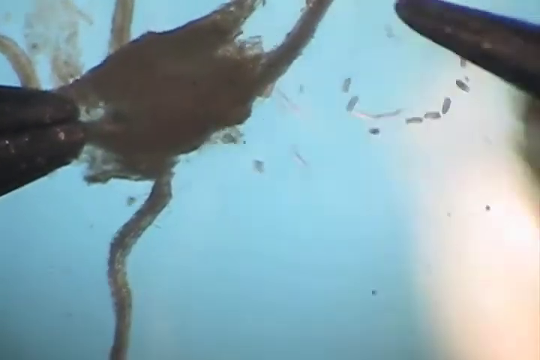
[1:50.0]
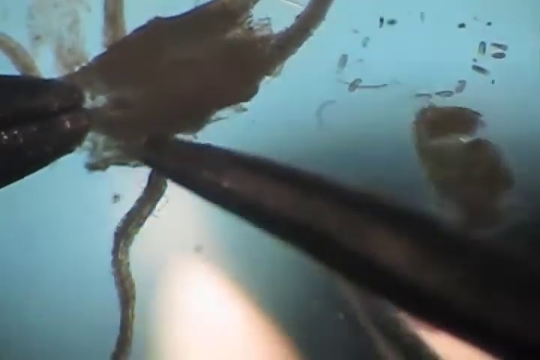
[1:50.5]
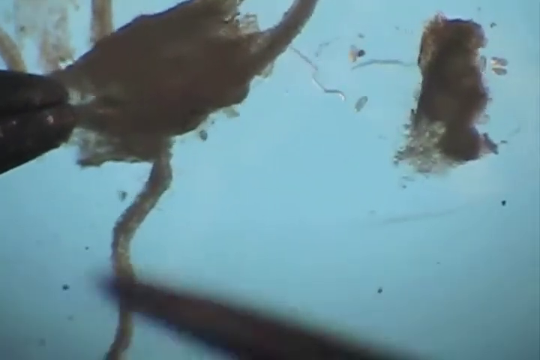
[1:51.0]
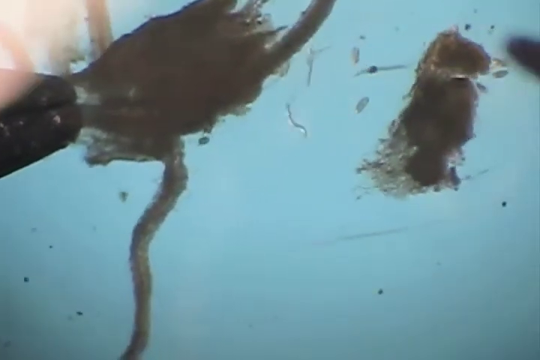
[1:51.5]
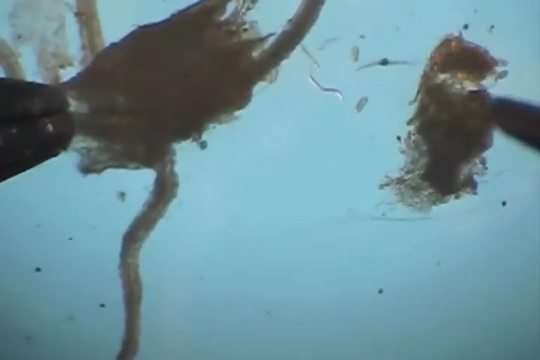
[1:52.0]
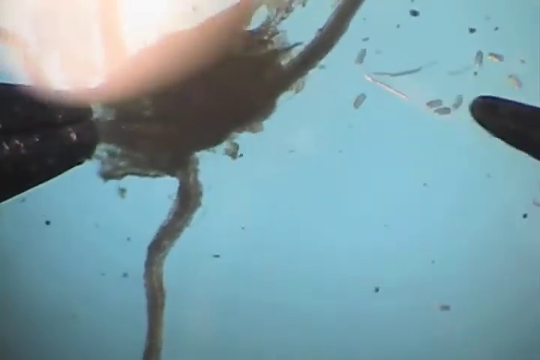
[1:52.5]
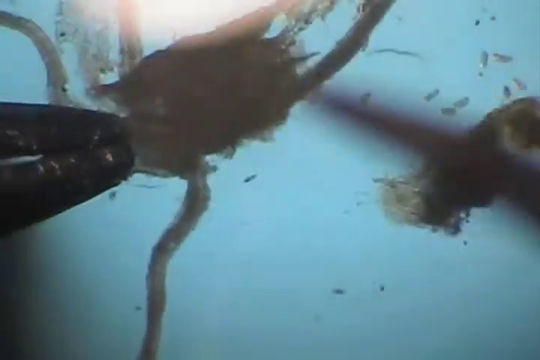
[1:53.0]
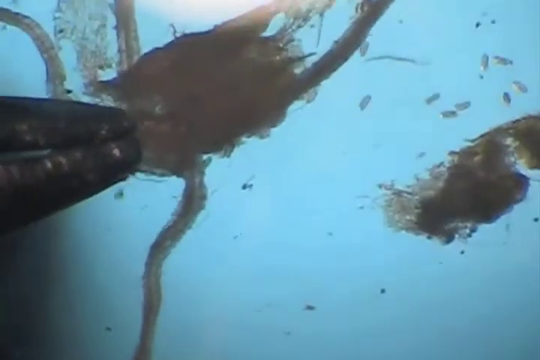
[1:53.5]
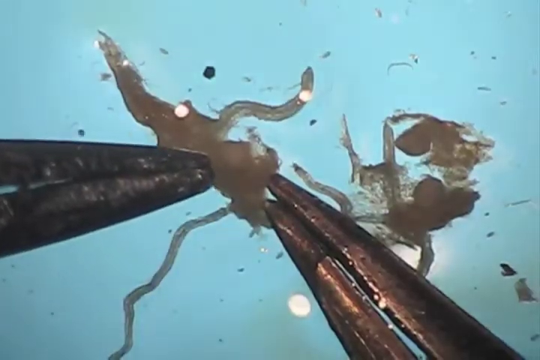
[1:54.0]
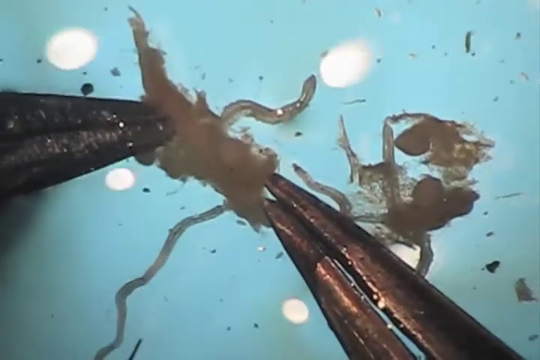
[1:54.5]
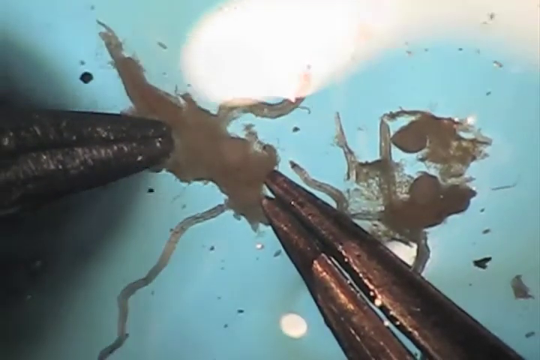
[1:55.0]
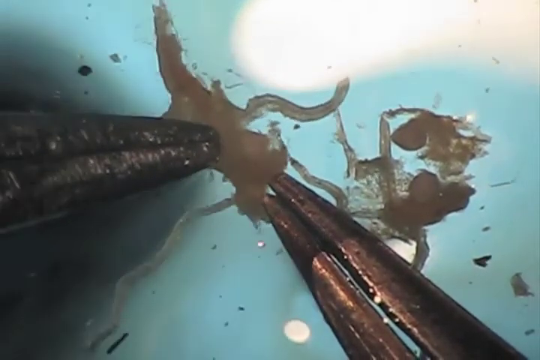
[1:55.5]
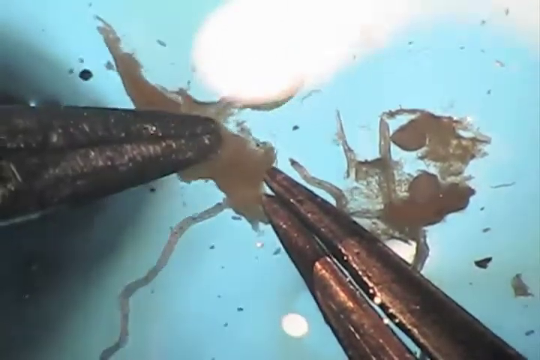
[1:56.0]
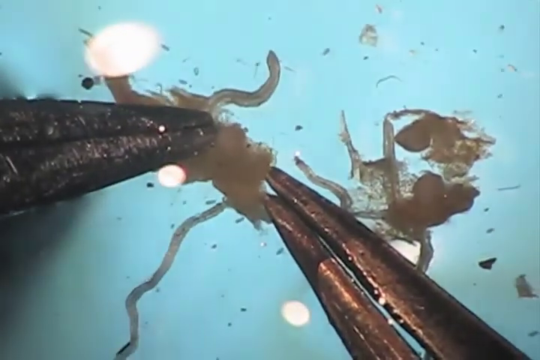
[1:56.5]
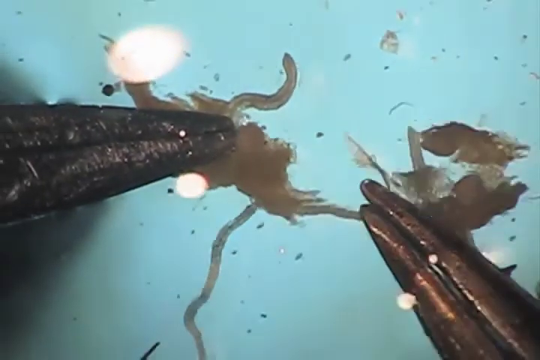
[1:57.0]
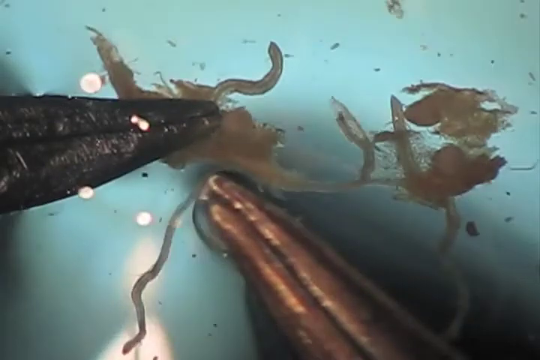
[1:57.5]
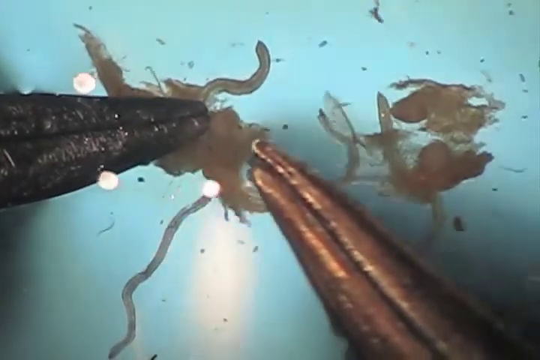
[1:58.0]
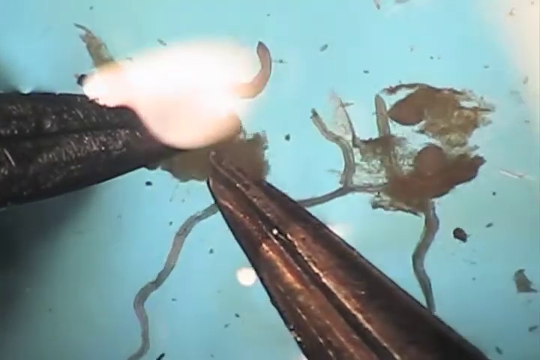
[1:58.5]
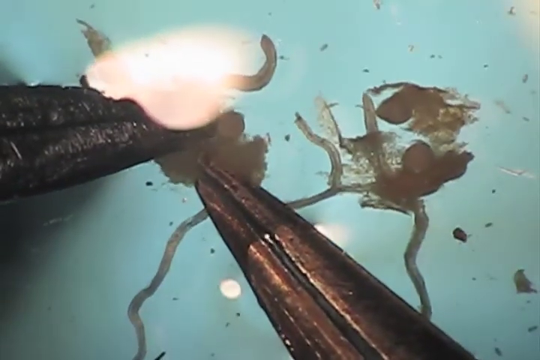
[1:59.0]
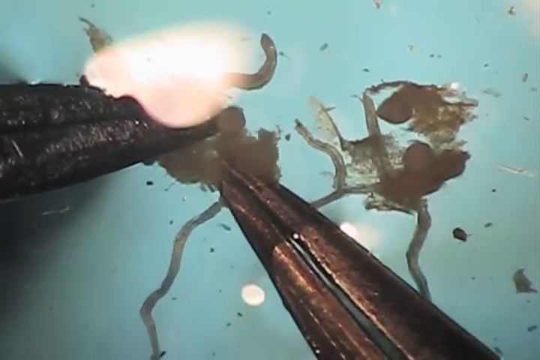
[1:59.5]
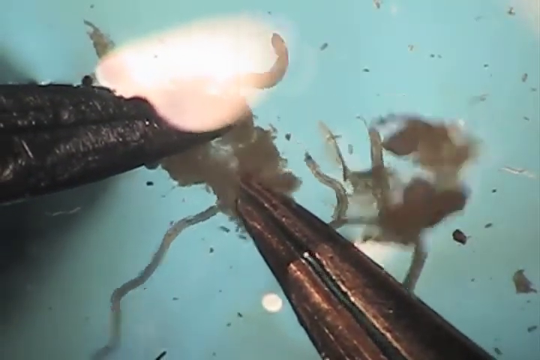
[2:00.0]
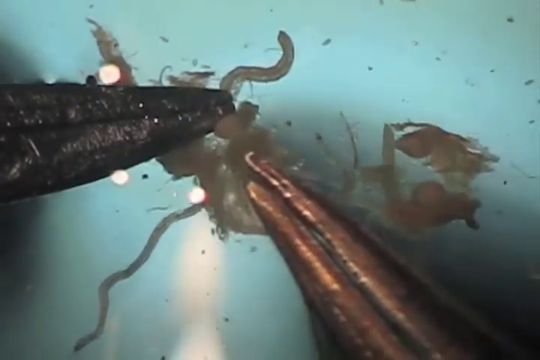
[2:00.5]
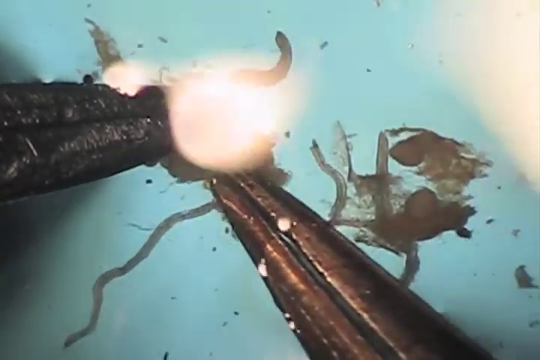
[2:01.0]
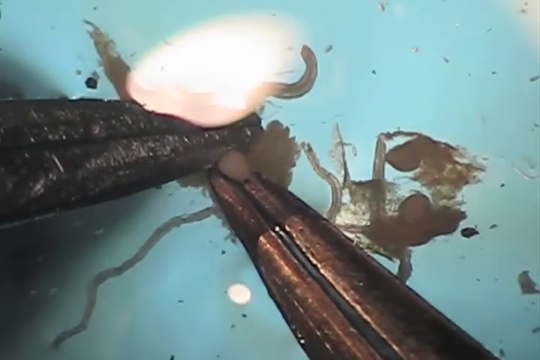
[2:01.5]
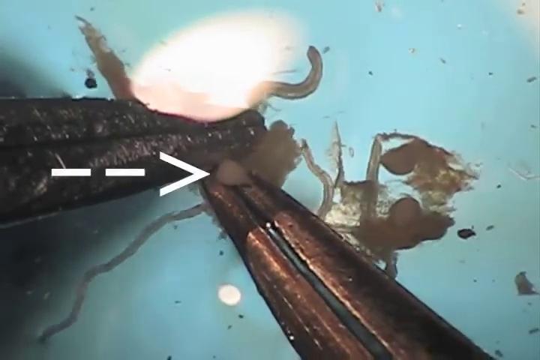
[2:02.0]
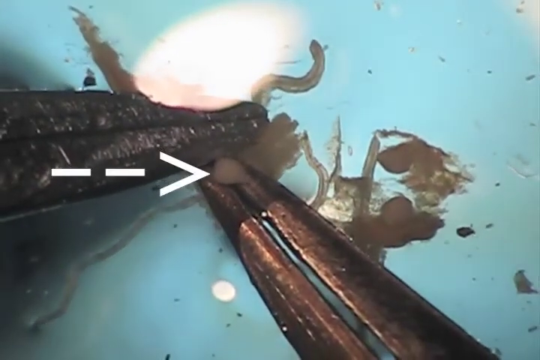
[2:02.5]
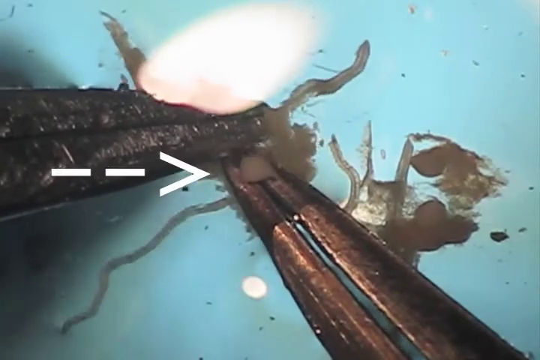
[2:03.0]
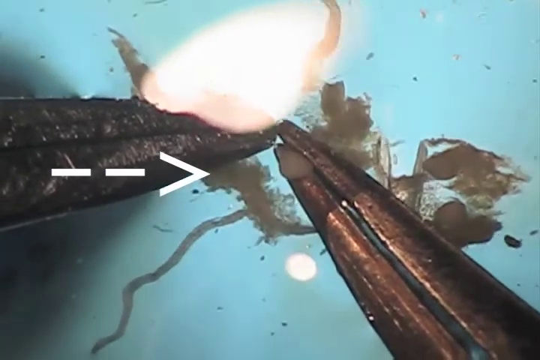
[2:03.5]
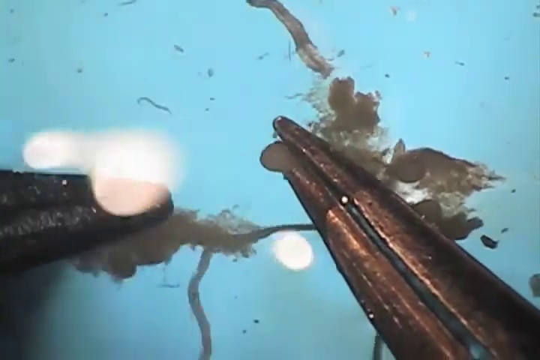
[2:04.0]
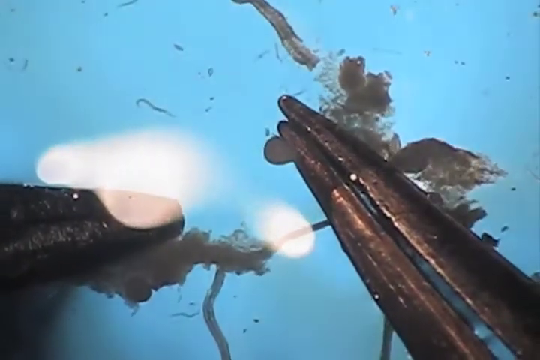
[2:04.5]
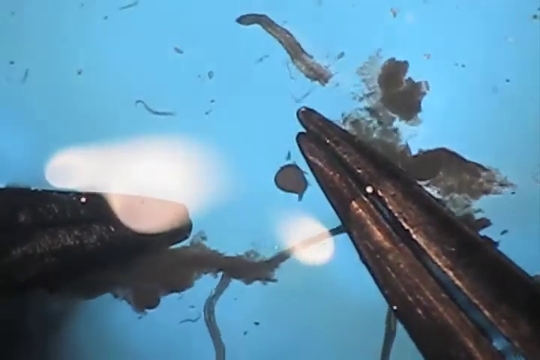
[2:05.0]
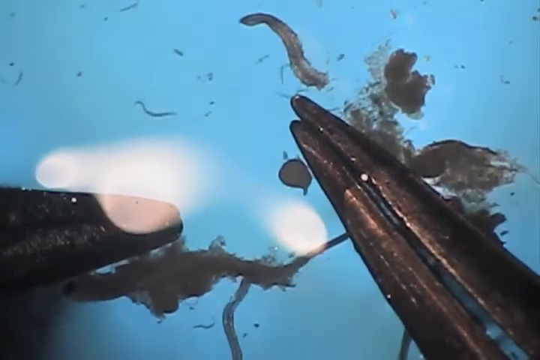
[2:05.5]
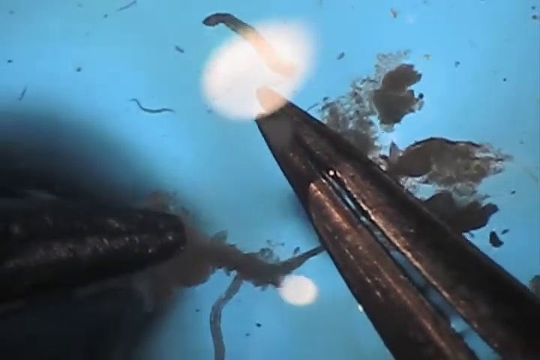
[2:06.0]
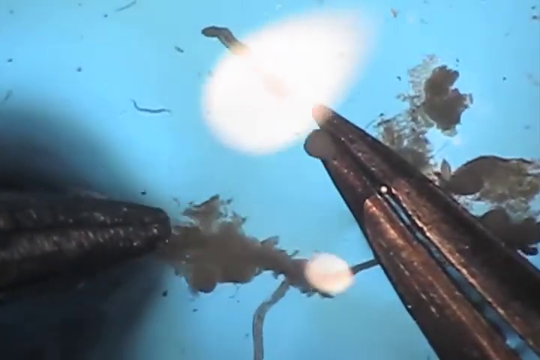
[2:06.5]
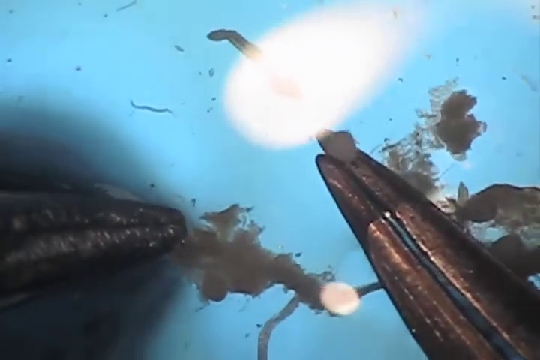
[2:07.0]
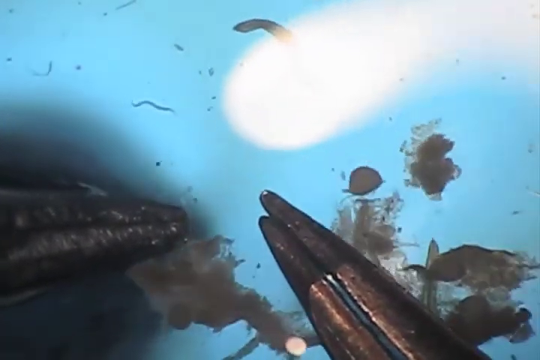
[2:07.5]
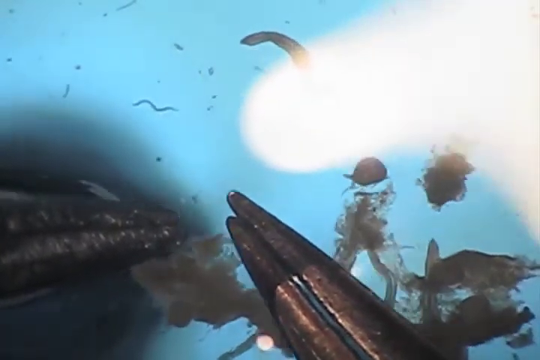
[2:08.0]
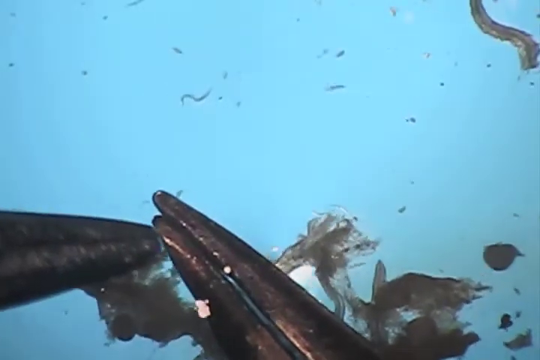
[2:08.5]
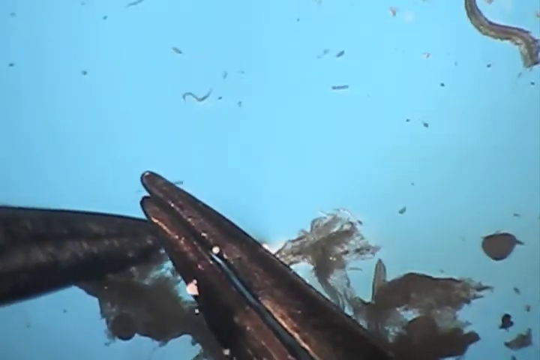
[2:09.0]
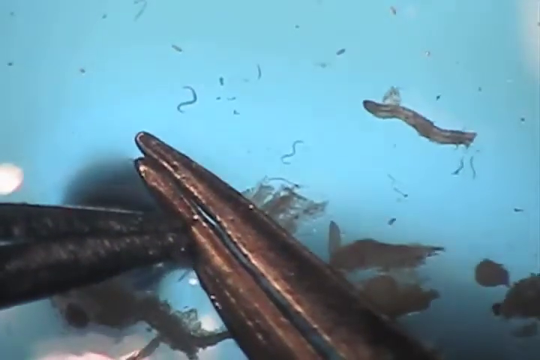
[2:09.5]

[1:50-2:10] The left side of the root piece is still gripped by the left tweezer. The right tweezer tries to pick up the other piece, but when it does, the piece flies out of the microscope's view. Another microscope view shows a tweezer picking apart a larger piece of the root. Some debris is visible in the microscope's field, and some white dots appear that seem to be from the microscope. A bulbous piece appears with a white arrow pointing to it; these seem to have come from the center mass of the root structure. The rest of the roots are separated away as the person tries to isolate the bulbous sphere uncovered from the large mass in the middle of the roots. It almost looks like a pearl being taken out of an oyster.